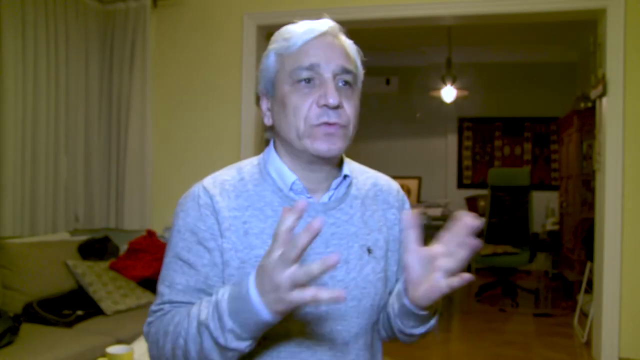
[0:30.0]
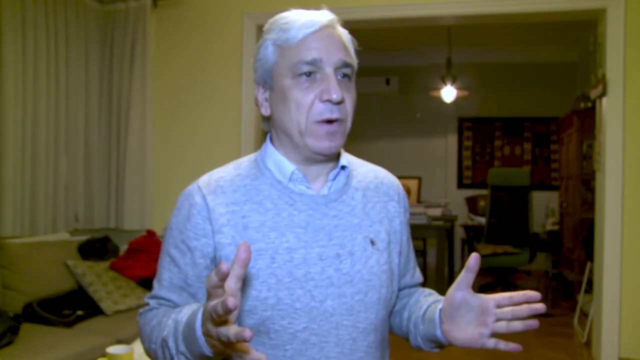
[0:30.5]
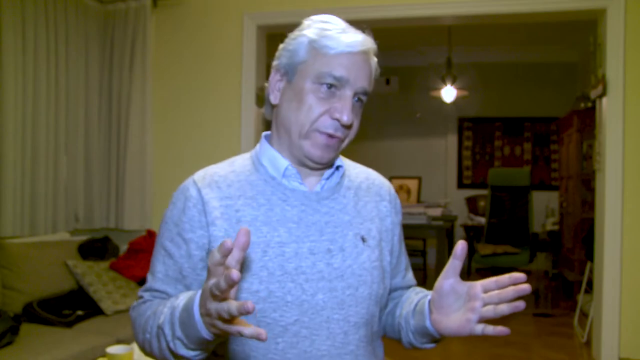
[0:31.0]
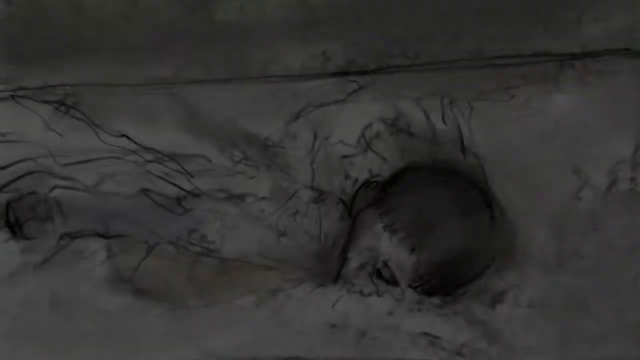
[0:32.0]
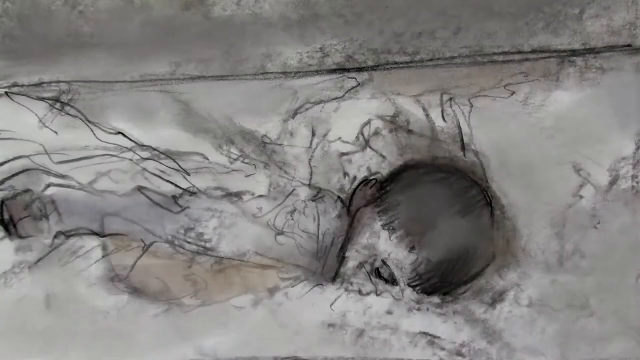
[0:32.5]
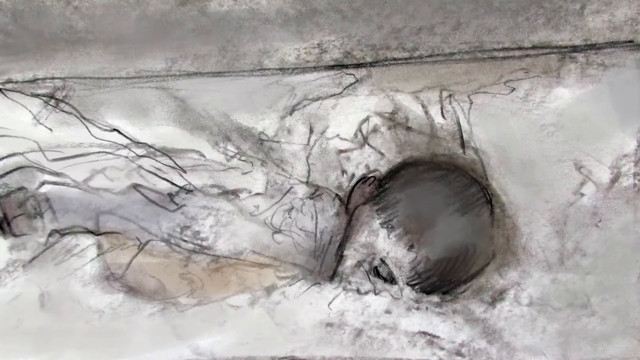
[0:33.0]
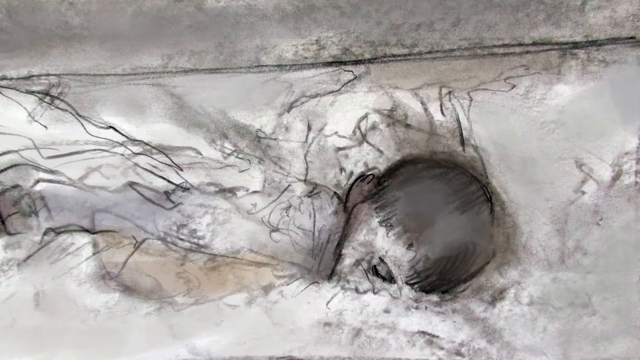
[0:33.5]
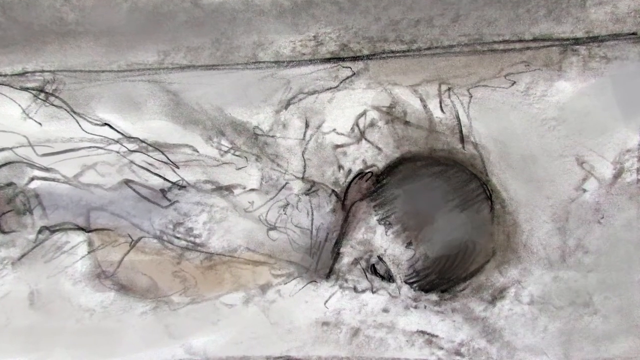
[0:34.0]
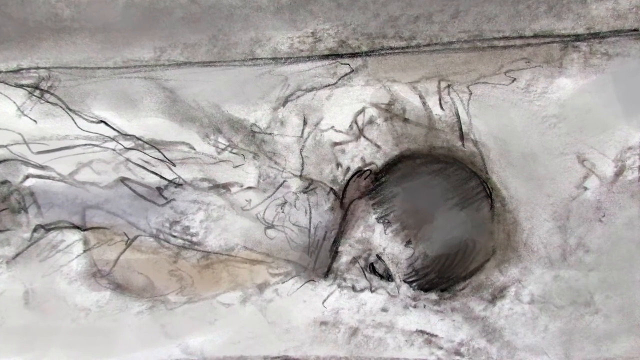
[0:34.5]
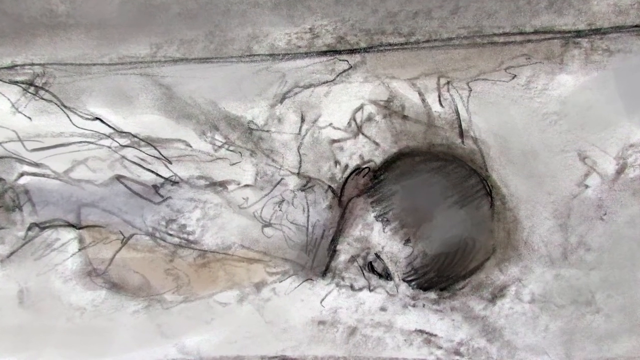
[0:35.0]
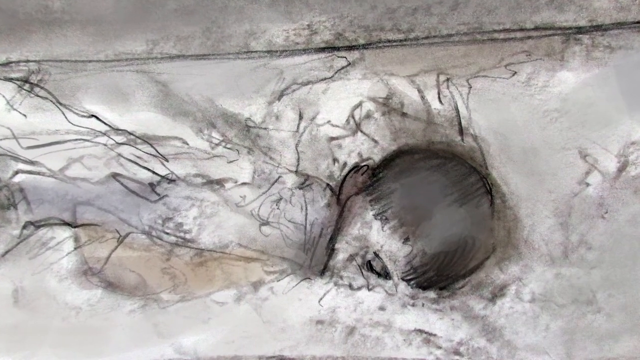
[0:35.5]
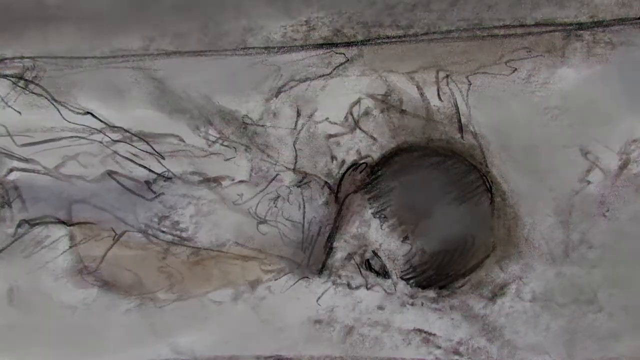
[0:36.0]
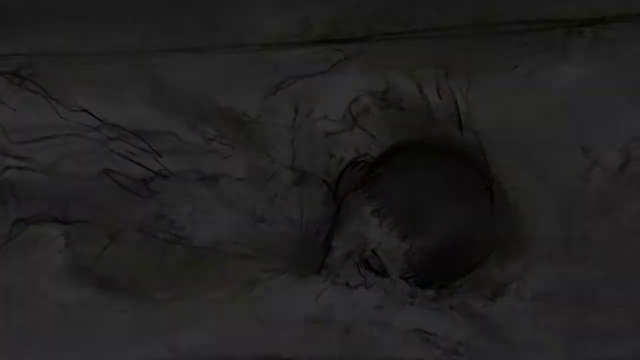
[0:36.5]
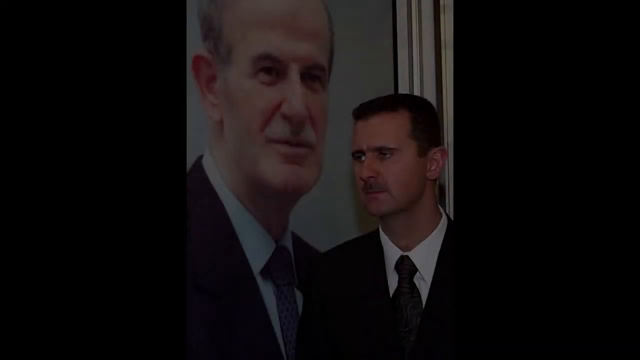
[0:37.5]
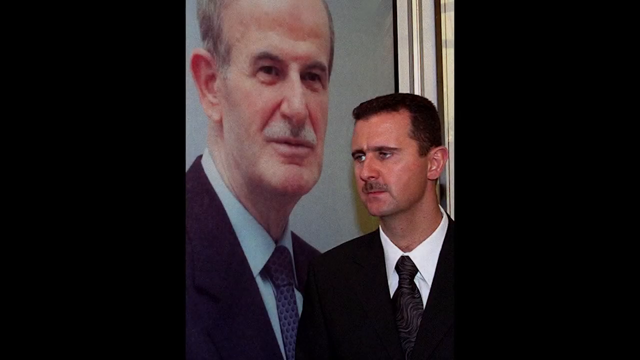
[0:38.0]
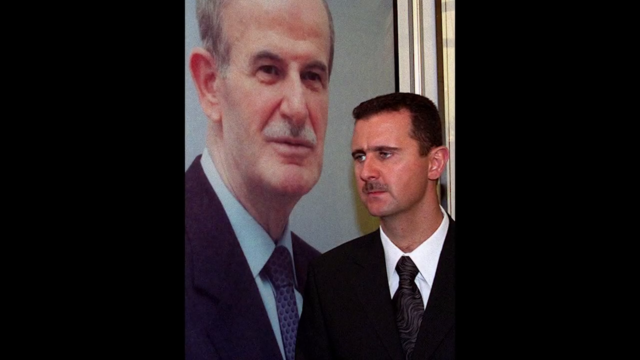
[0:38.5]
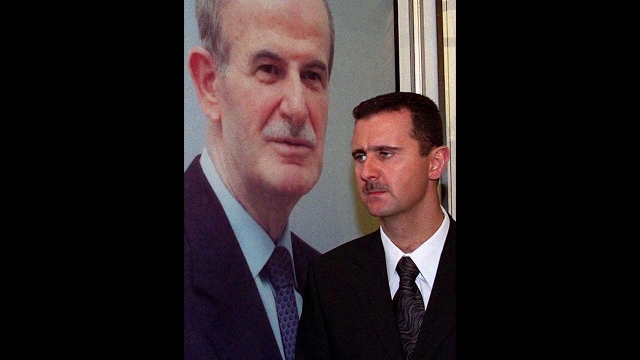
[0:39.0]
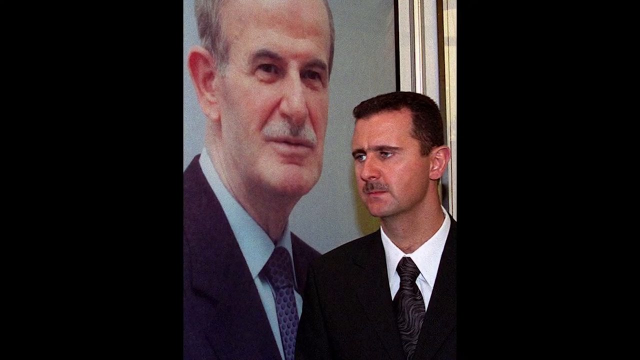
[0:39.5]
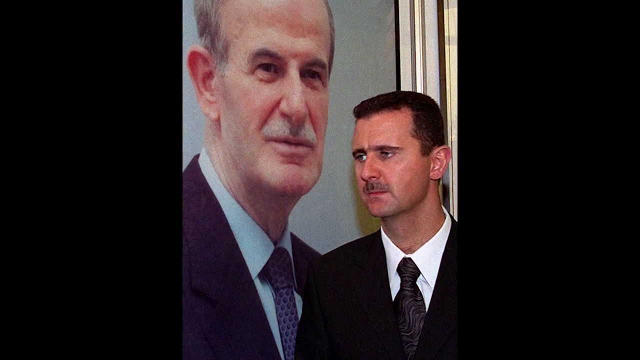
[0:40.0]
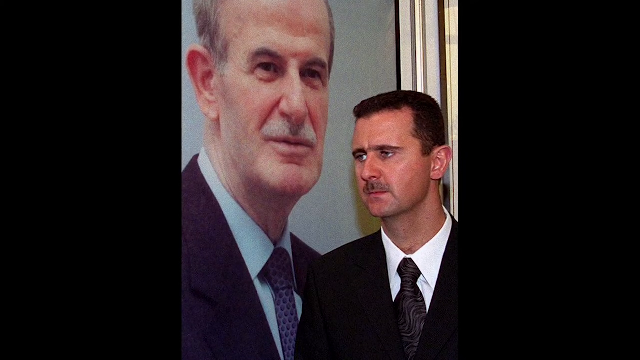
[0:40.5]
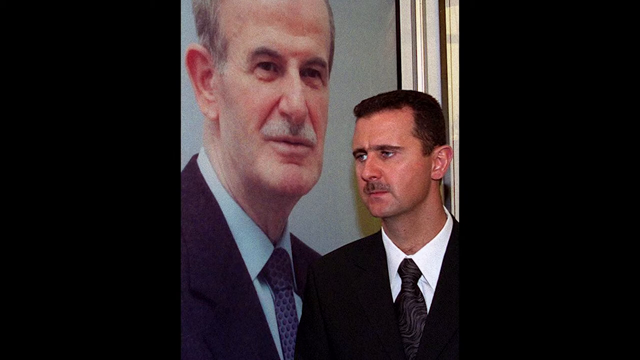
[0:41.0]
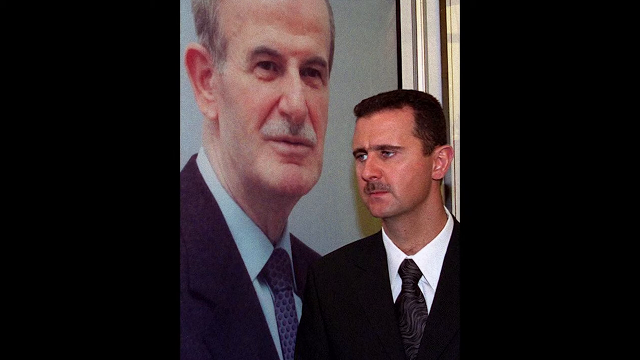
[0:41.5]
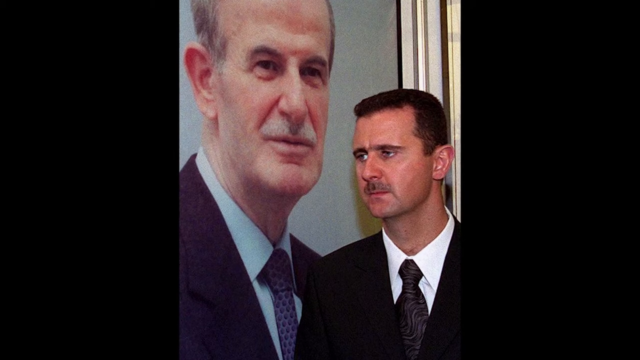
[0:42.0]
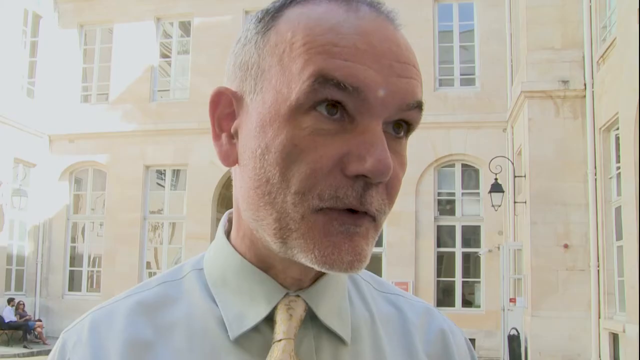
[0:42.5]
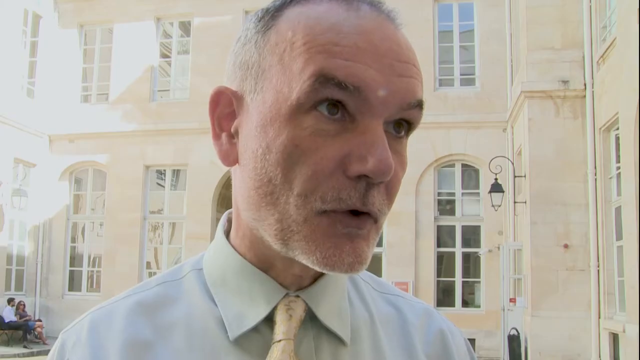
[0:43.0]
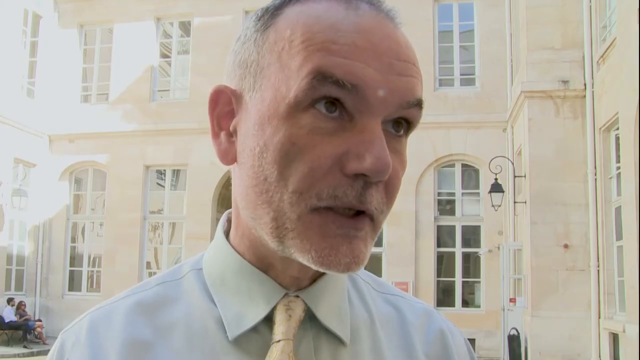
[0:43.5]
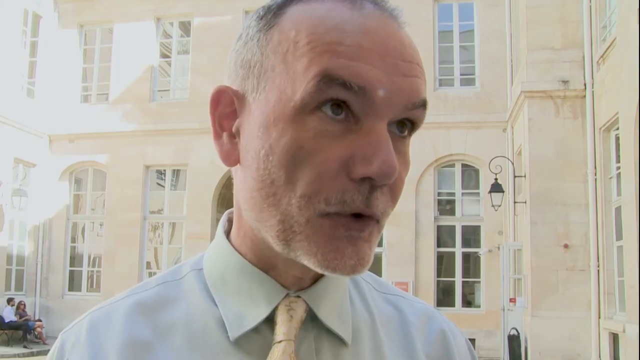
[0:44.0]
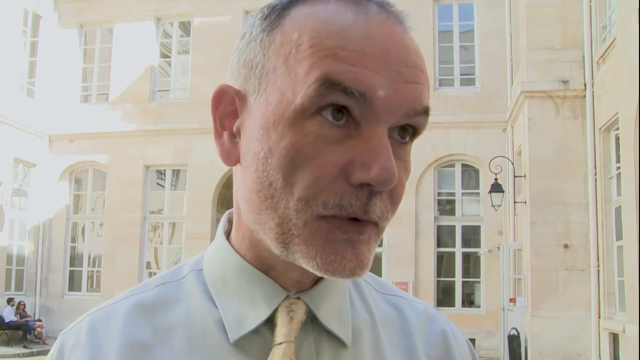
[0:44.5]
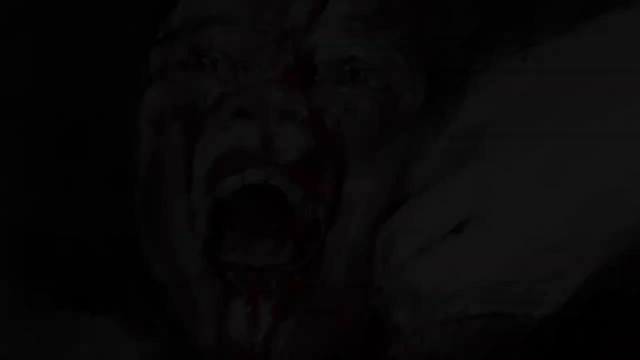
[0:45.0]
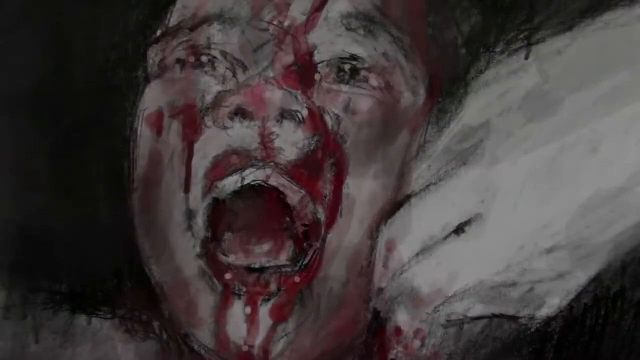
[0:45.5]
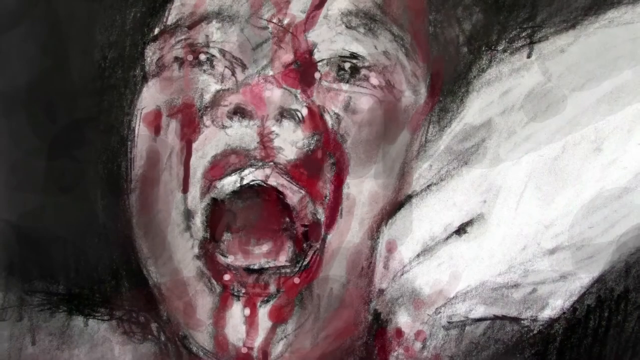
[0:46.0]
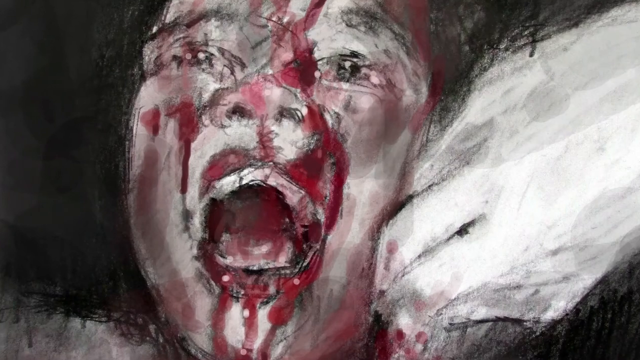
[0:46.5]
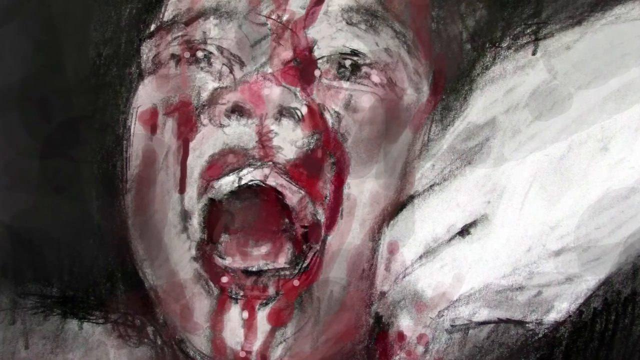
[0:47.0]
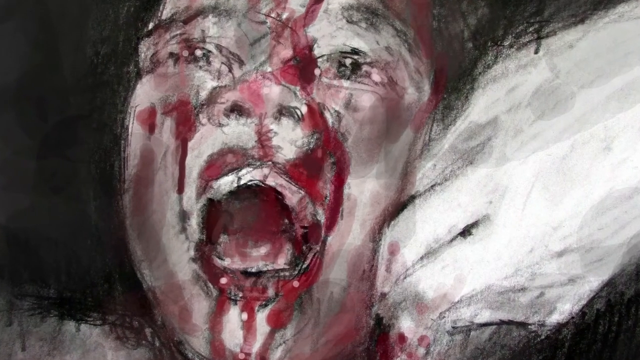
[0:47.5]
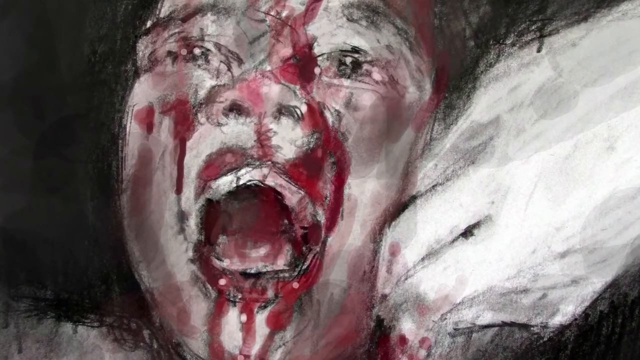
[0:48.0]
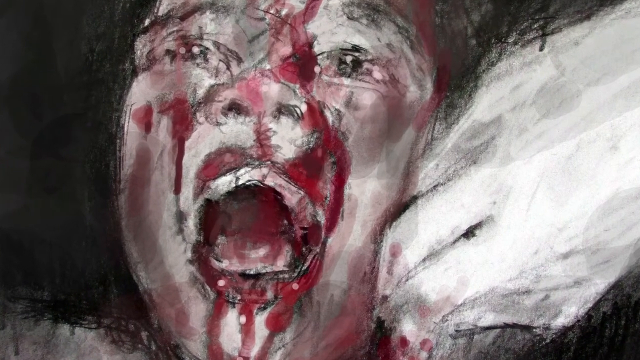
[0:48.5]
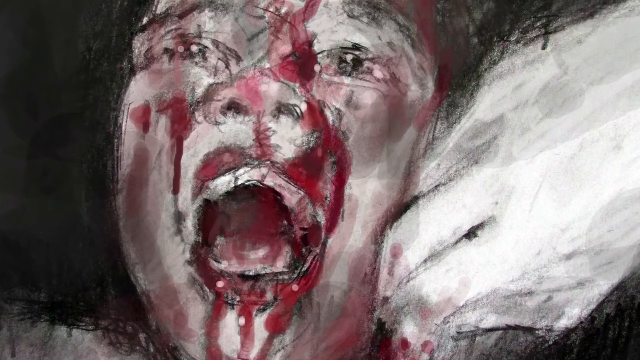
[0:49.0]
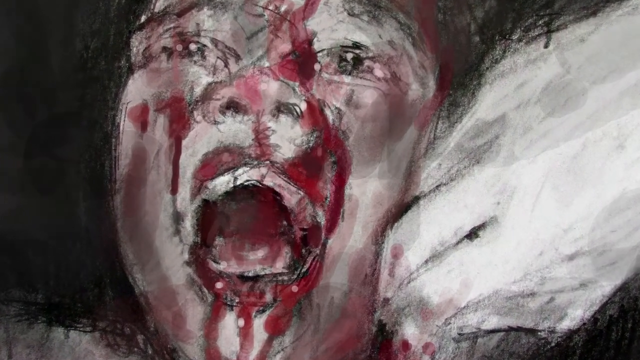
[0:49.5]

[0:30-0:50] There is a picture of two old men, one of whom is being interviewed. The images appear to have anime-style shading. A person's face is full of blood, as if they were attacked by something. A child lies on the ground with the body covered, only the child's face showing at the head. A painting shows someone screaming for help.